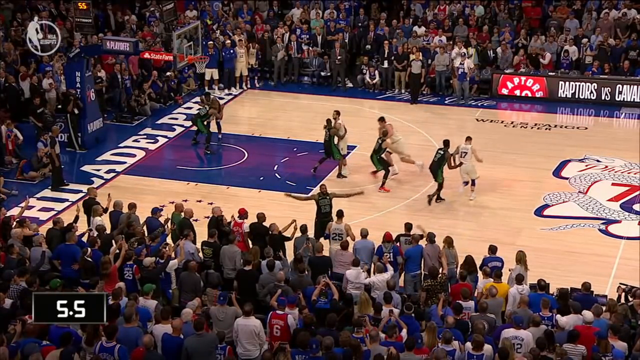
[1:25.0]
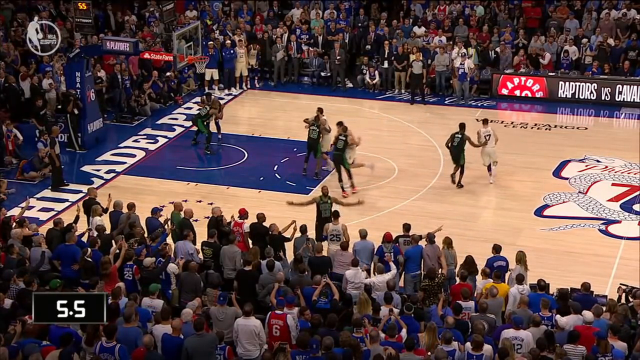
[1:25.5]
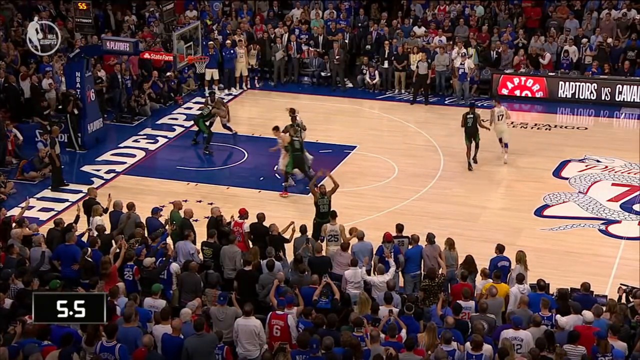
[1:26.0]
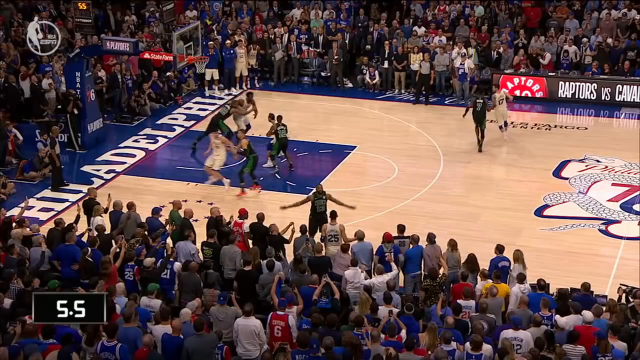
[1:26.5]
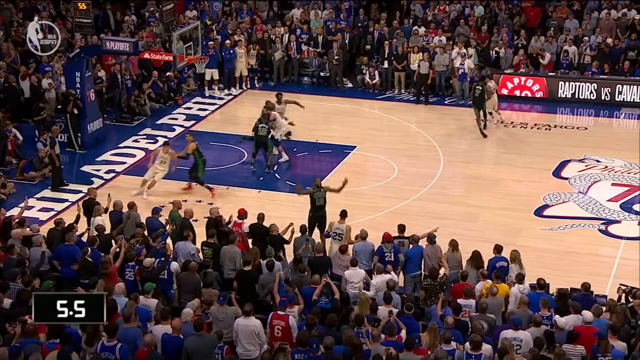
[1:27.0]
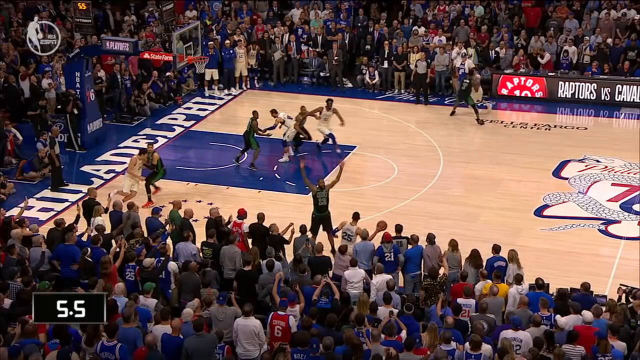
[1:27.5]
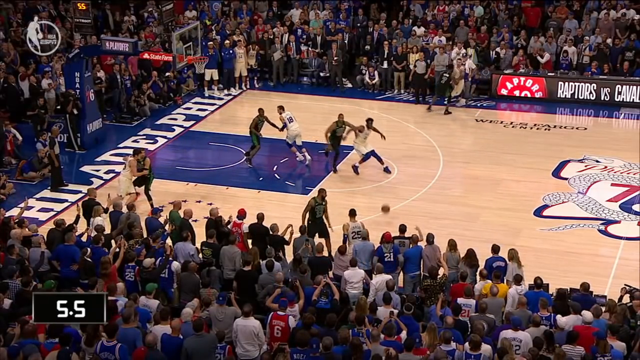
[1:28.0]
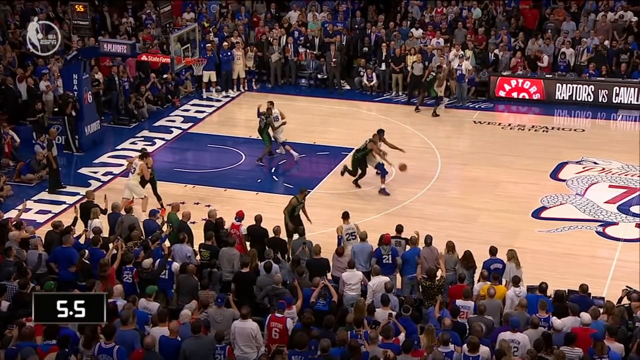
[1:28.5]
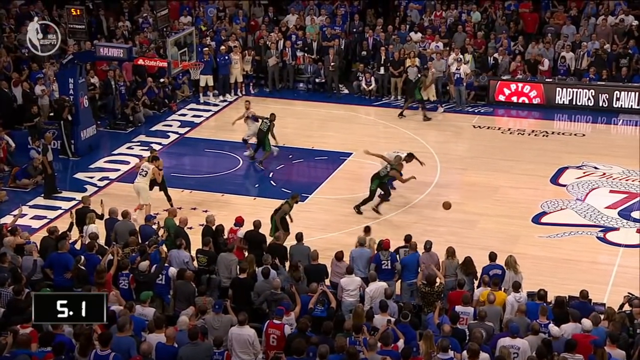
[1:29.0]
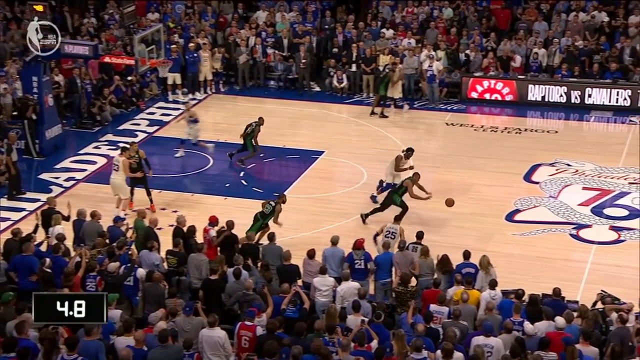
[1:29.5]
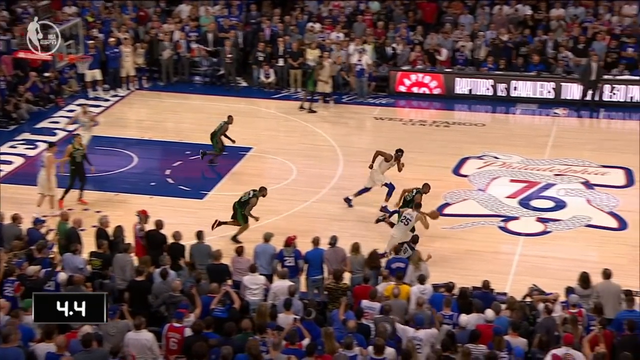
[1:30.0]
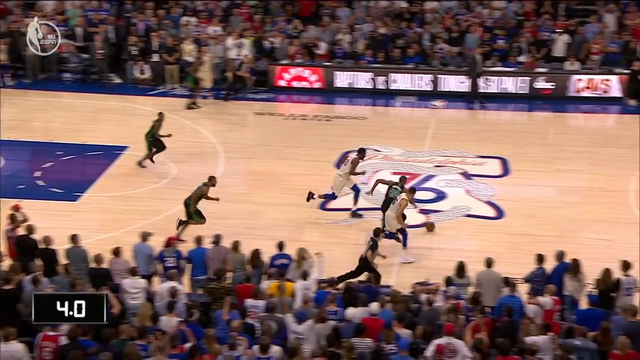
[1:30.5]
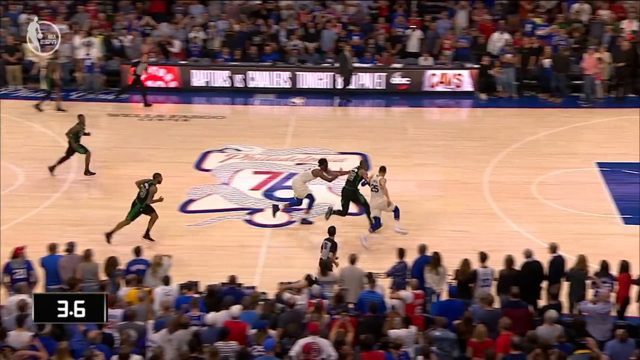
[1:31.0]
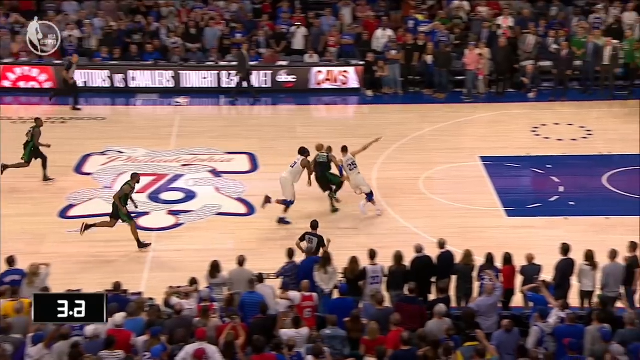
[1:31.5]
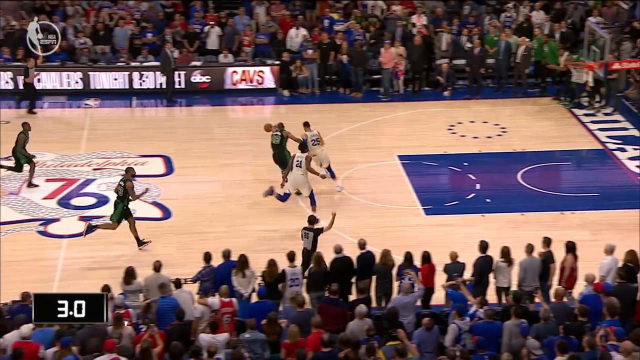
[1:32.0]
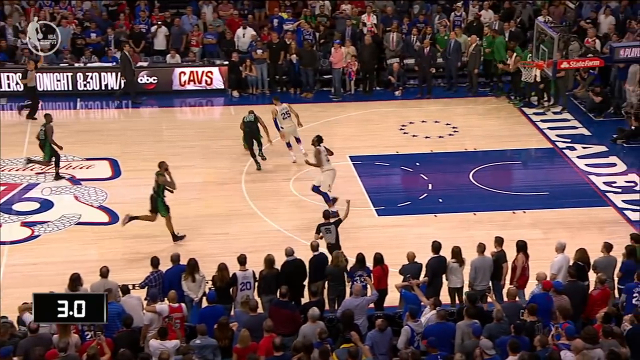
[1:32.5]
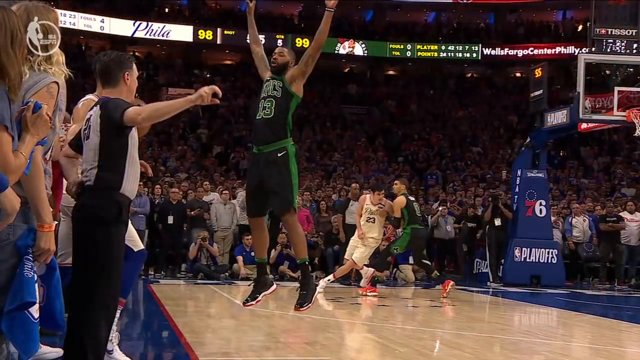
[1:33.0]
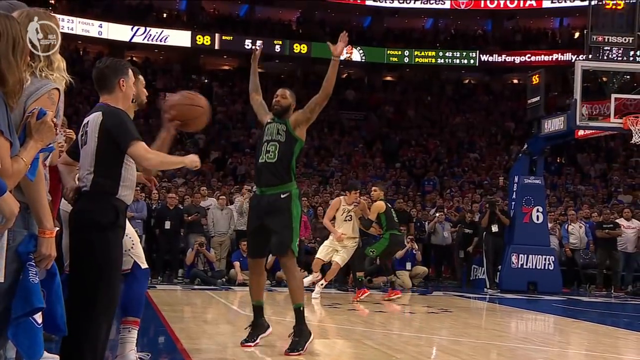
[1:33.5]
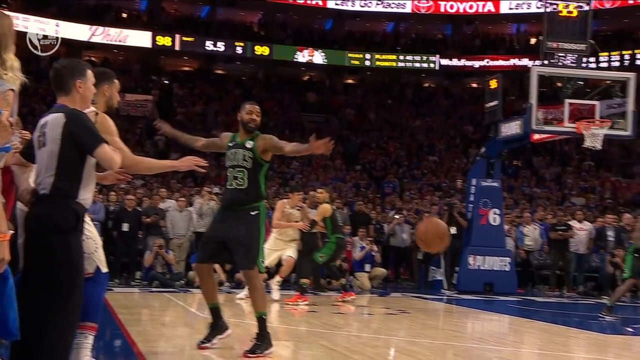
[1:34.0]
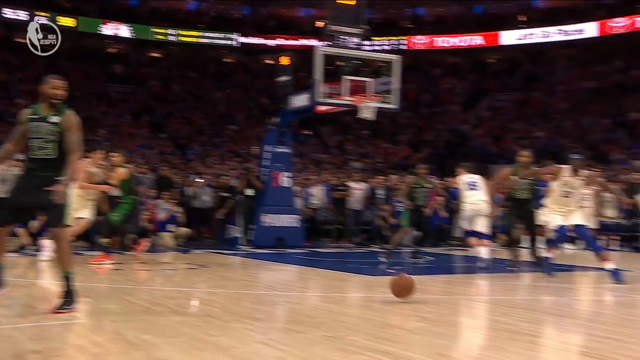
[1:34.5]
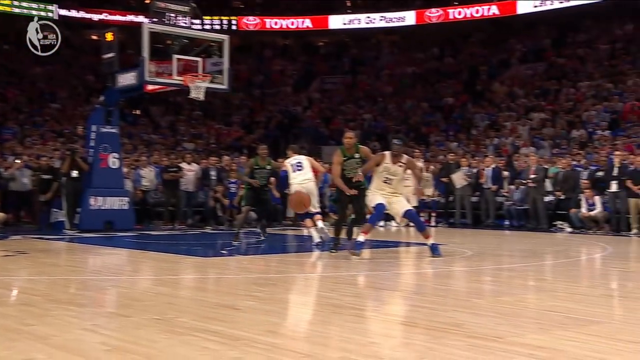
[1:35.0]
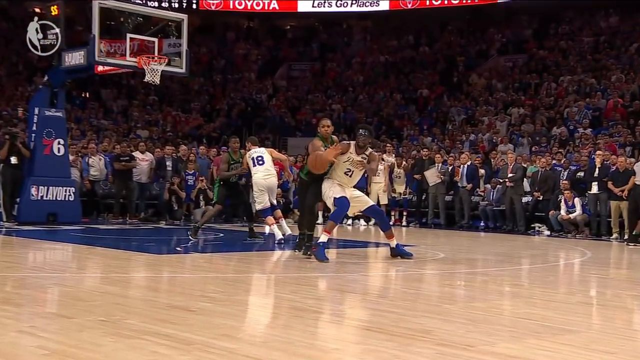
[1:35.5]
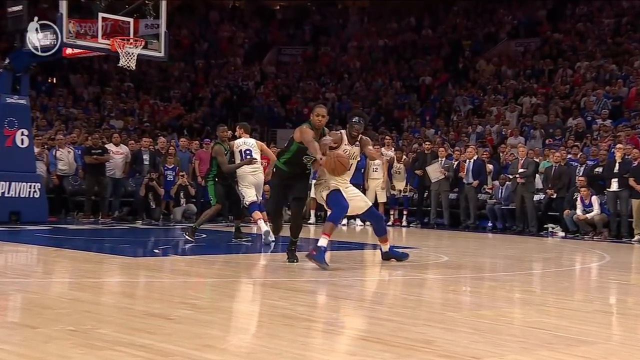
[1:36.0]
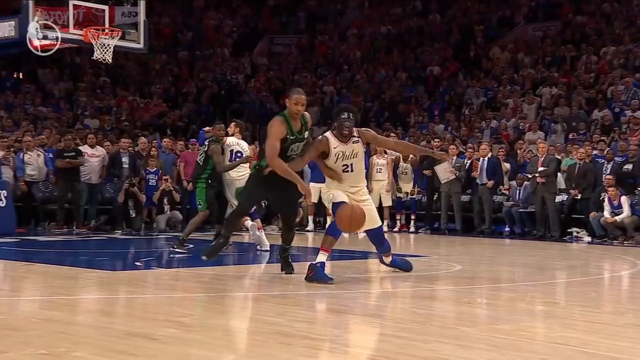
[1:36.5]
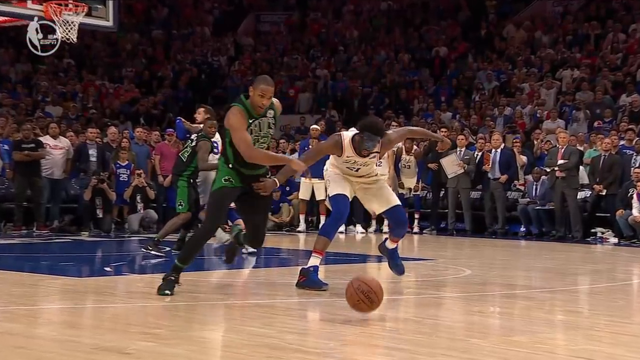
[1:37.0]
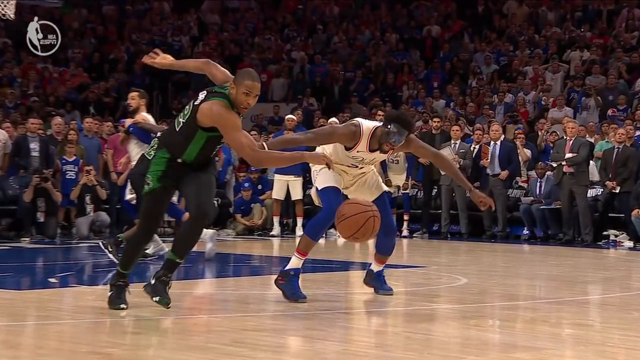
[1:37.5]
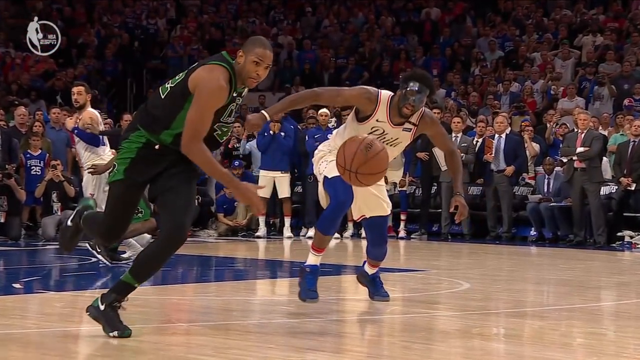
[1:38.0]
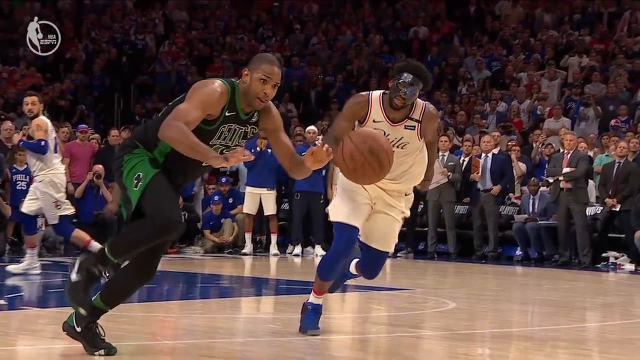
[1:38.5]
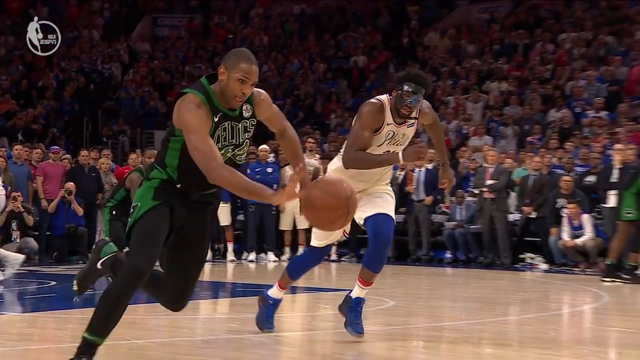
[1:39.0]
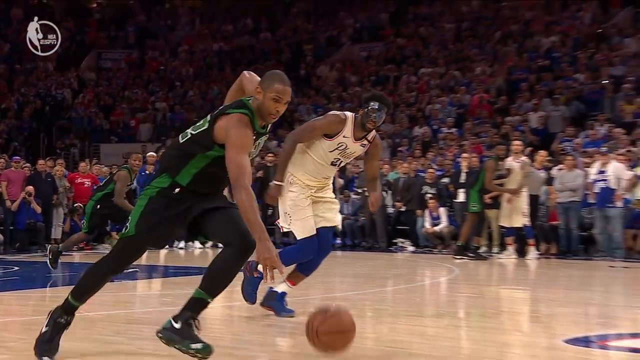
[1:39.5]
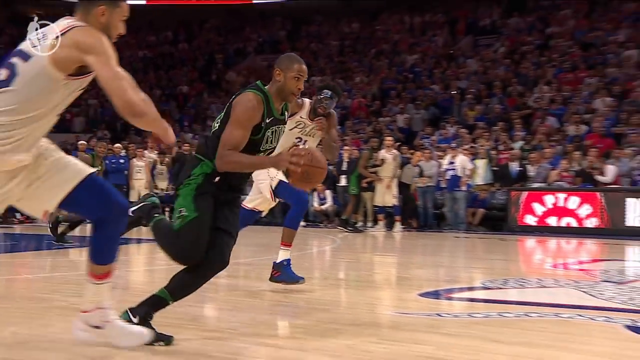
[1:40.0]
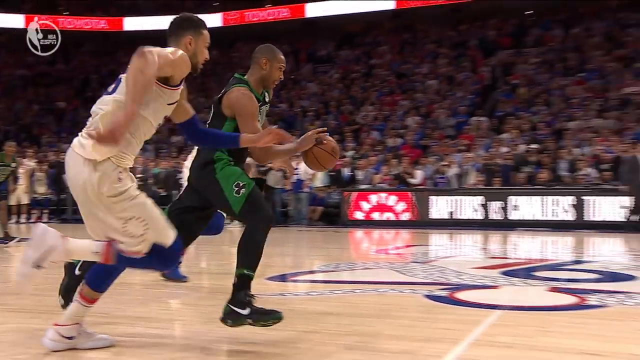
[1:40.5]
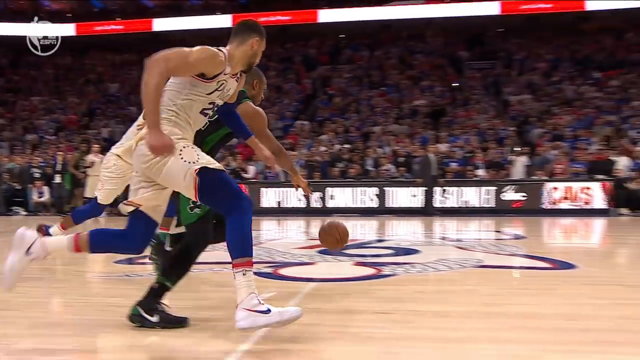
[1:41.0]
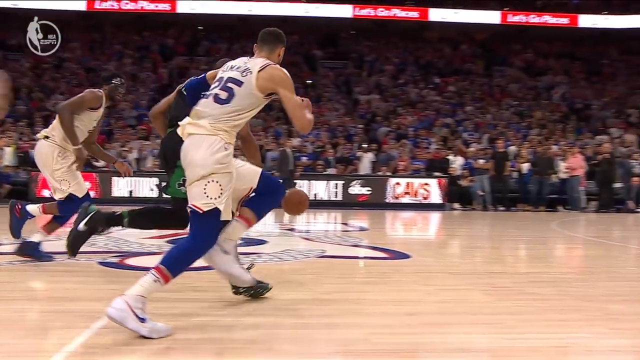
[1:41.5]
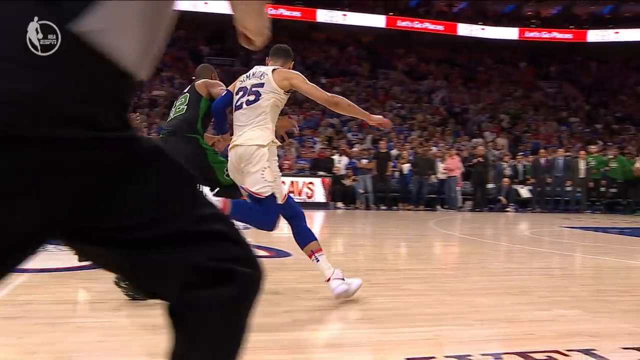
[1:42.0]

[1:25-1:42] A replay shows the same play. The Celtics player steals the ball from the player it was being passed to and starts dribbling to the right, then loses control when a player behind him knocks it out of his hand. A slower close-up follows, showing him starting to dribble as a player comes up to him on the right. The 76ers player looks like he is about to get the ball, but it is knocked out of his hand by the Celtics player right behind him; he tries to hold him back, but the Celtics player bursts right in front of him.